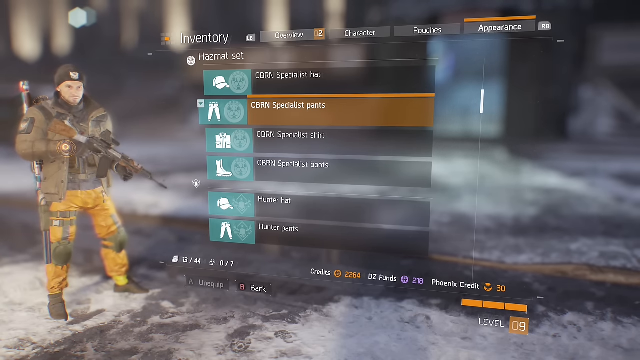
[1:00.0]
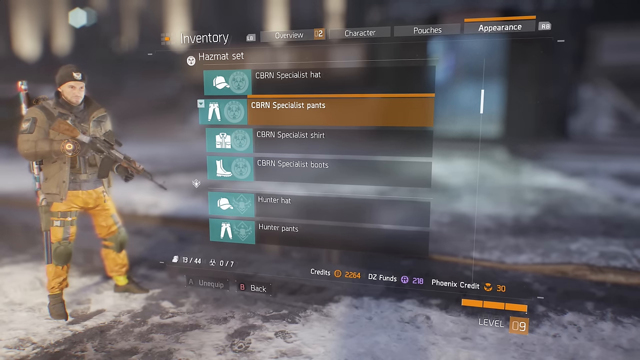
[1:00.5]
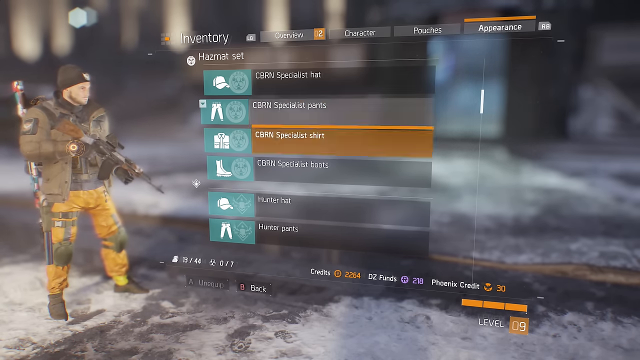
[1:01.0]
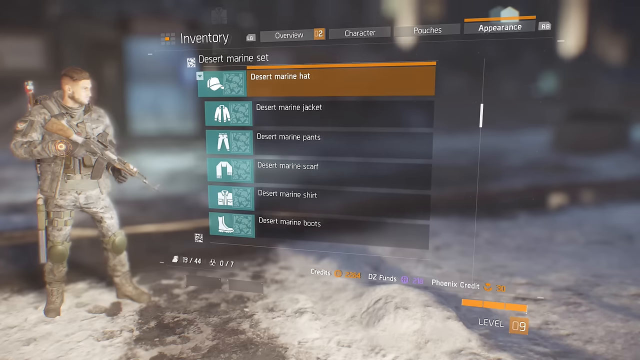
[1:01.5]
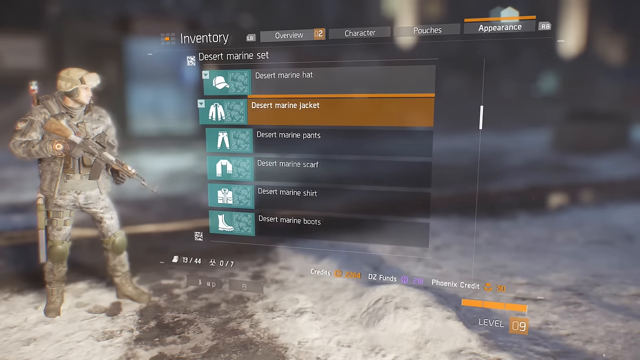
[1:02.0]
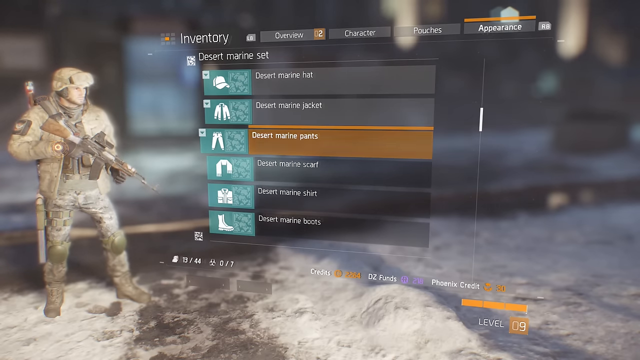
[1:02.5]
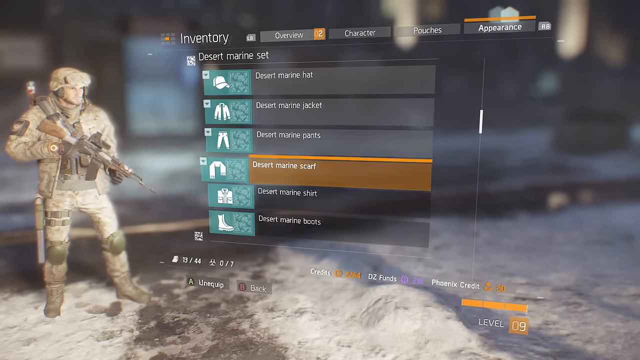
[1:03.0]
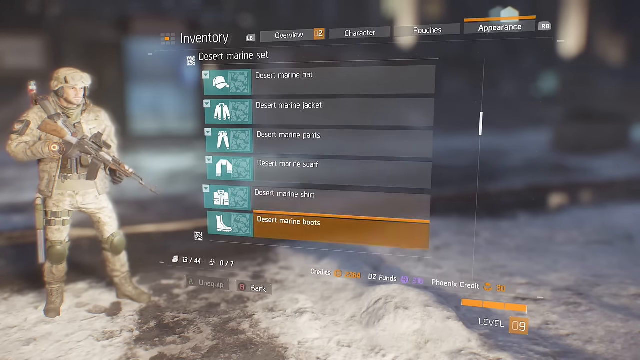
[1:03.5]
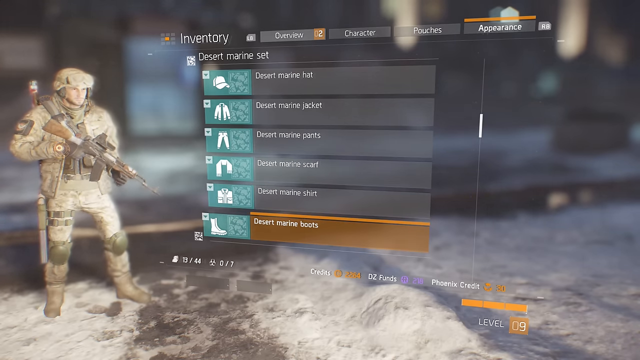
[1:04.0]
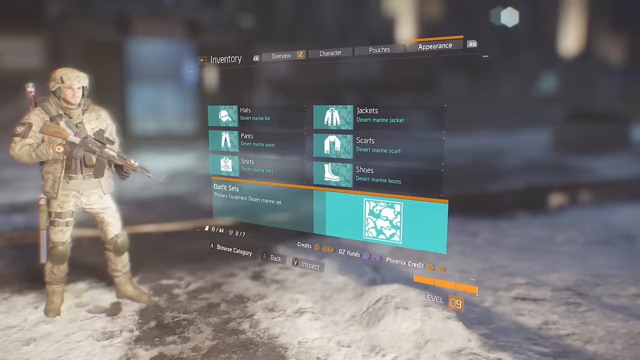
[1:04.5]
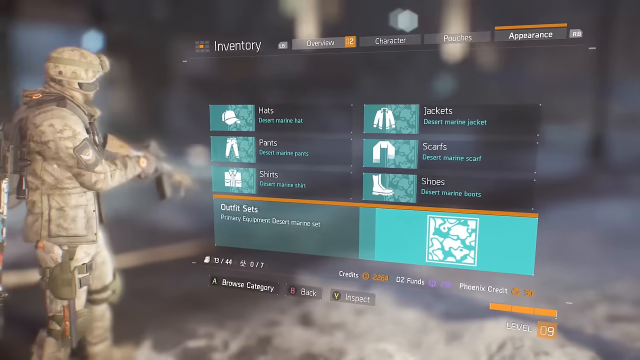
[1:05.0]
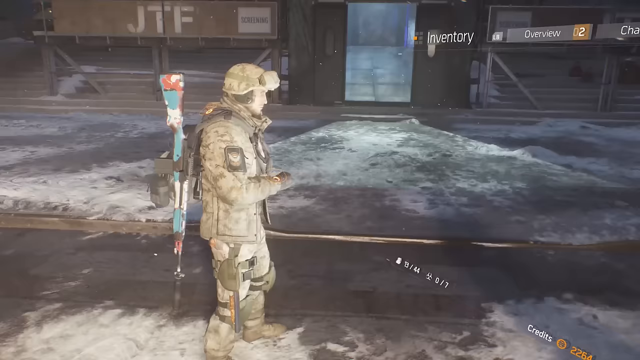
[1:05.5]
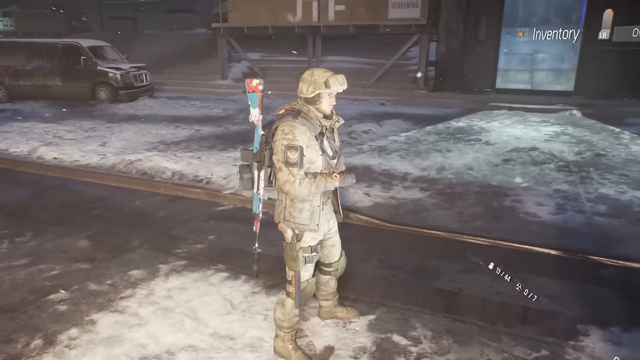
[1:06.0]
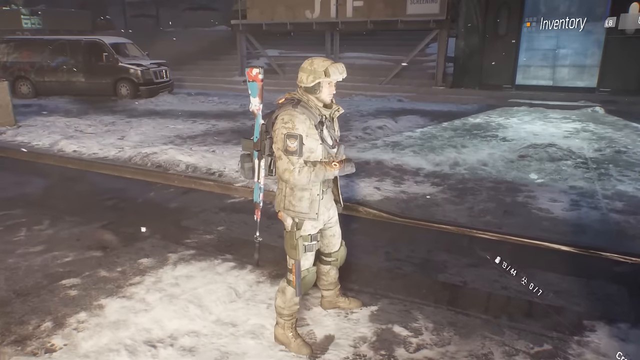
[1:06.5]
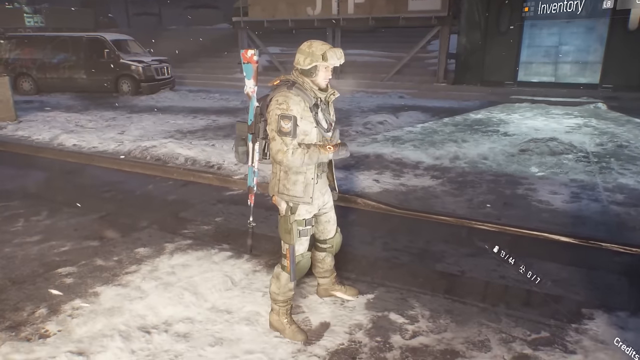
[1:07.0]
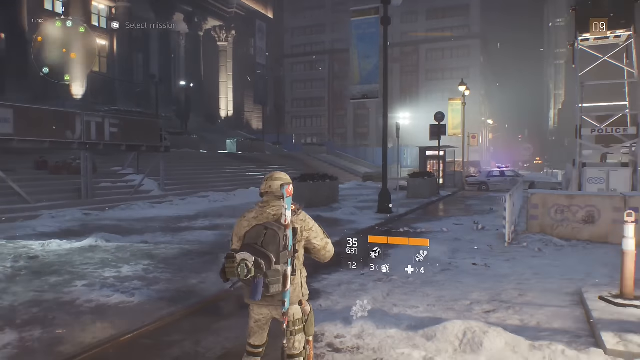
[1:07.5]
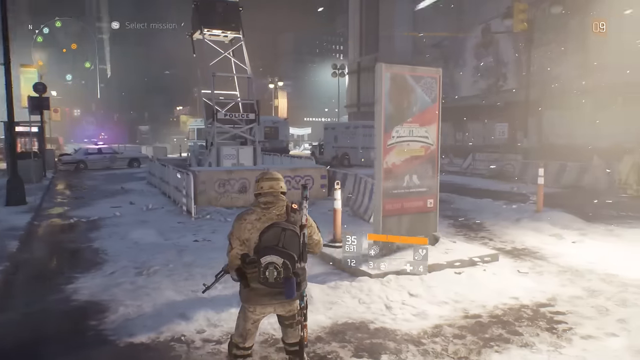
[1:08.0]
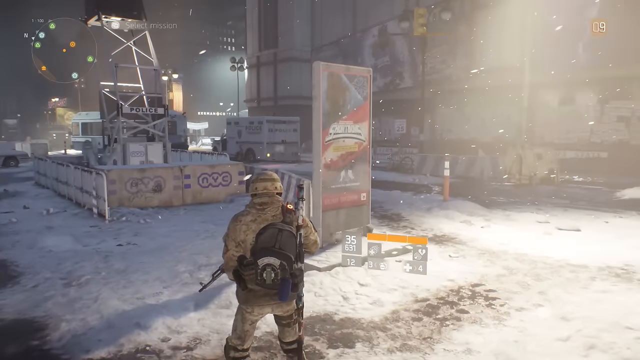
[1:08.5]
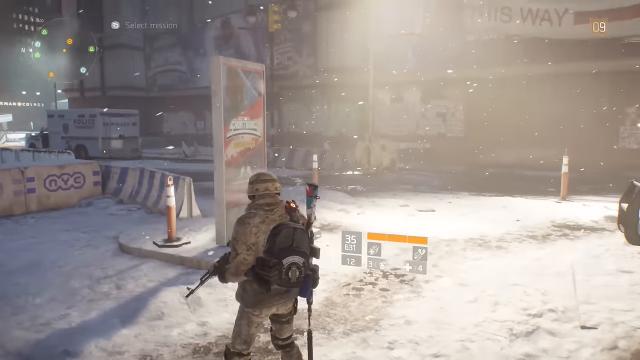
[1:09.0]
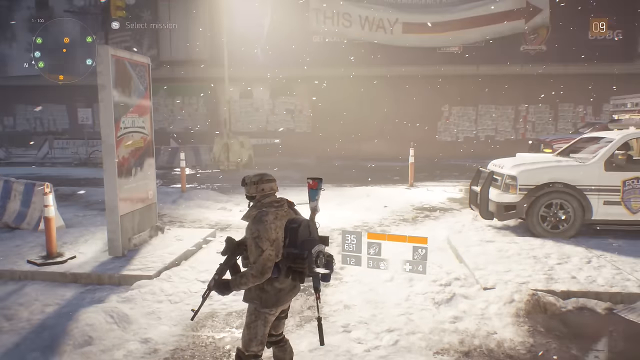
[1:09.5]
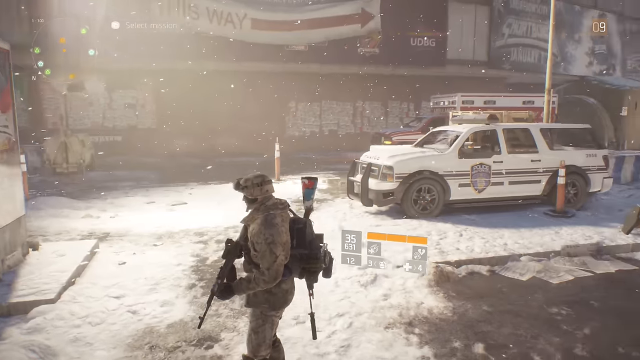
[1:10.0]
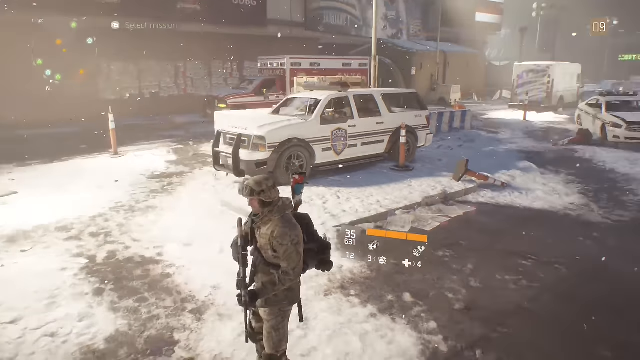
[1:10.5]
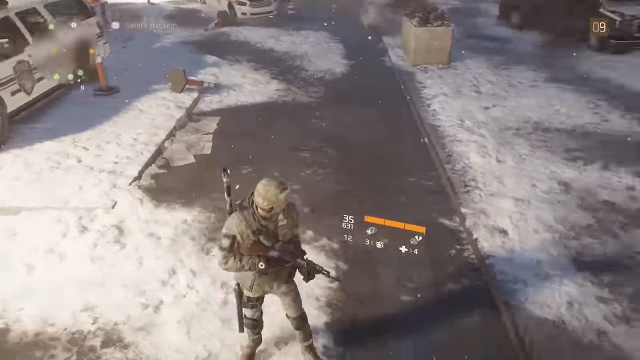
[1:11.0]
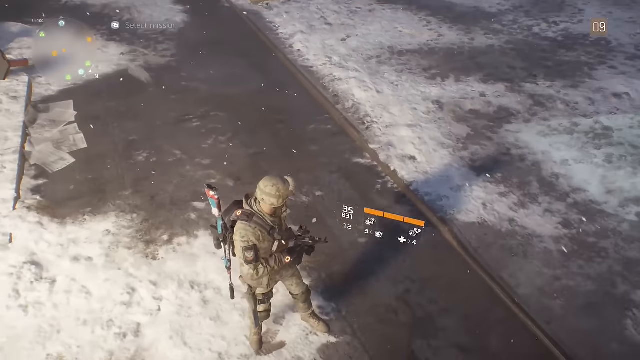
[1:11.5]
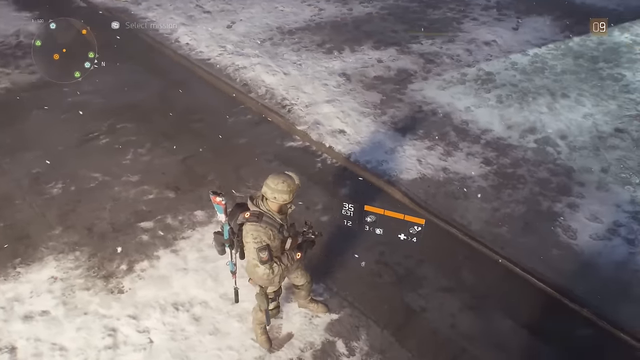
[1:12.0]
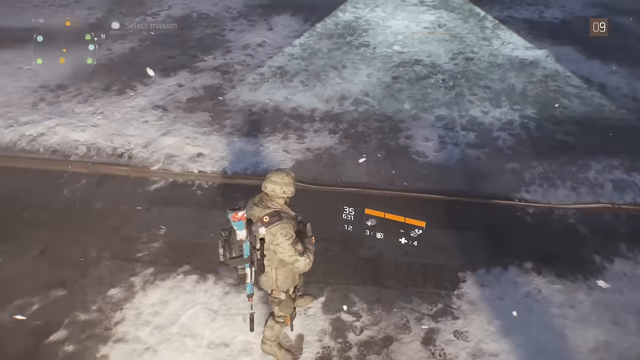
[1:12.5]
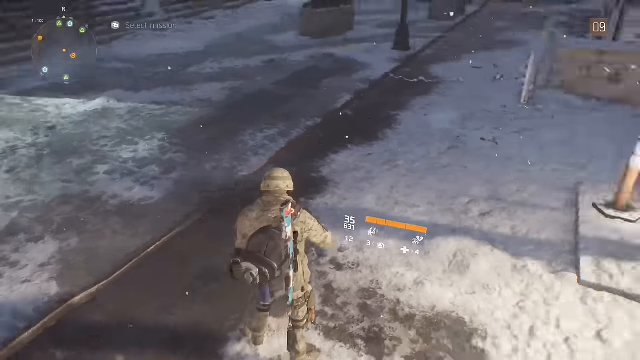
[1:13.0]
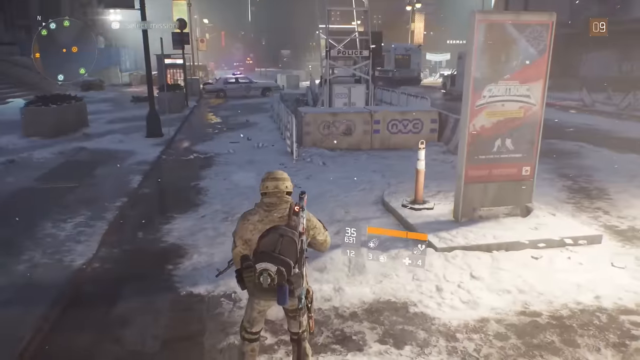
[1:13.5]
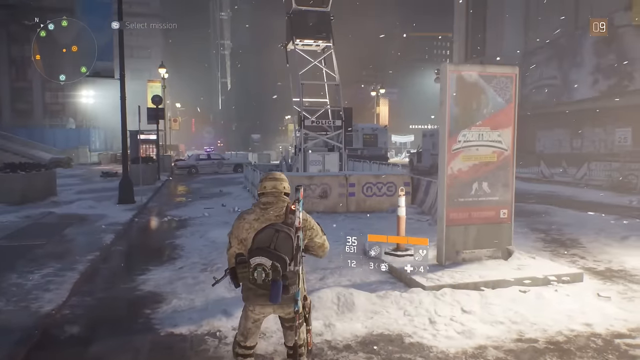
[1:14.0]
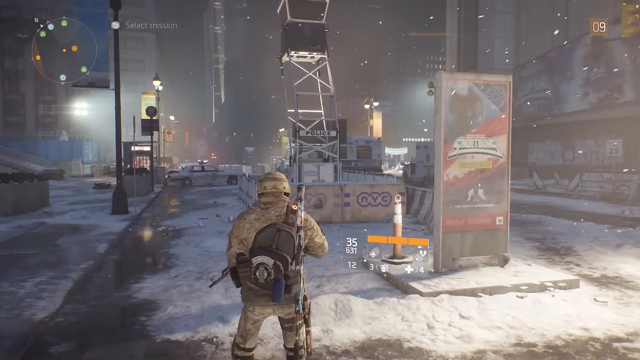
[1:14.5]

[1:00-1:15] The clothing menu is open, and the character is changed back into a full camo military outfit with a camouflage helmet. The scene returns to third person in the city, which looks very dark and dystopian. The view scans around, showing a white SUV, and snow appears to be falling and on the ground. The view goes back through a menu and then returns to scanning around the town. There are some signs, and equipment, like construction or military equipment, up ahead. It appears to be nighttime, and street lights are on along the road. The view scans from the front of the character to around behind them and then kind of up over the character, so it is fast and vague. A black van is in the background.